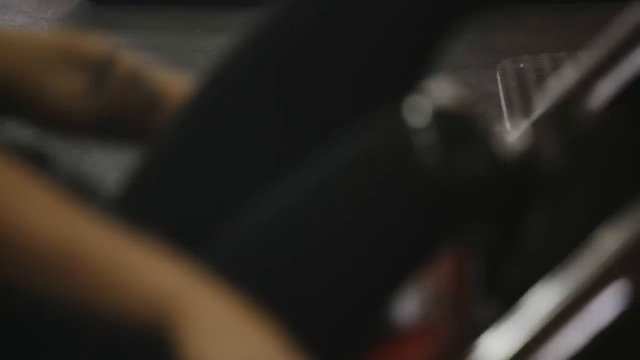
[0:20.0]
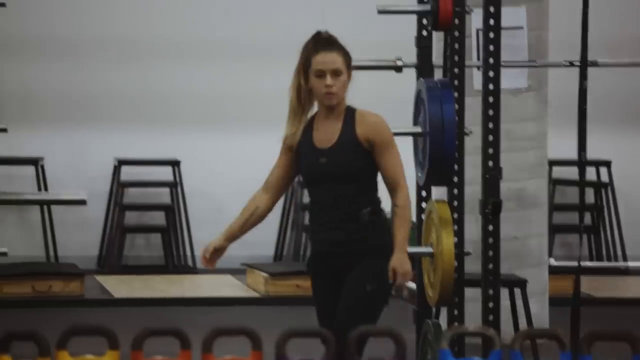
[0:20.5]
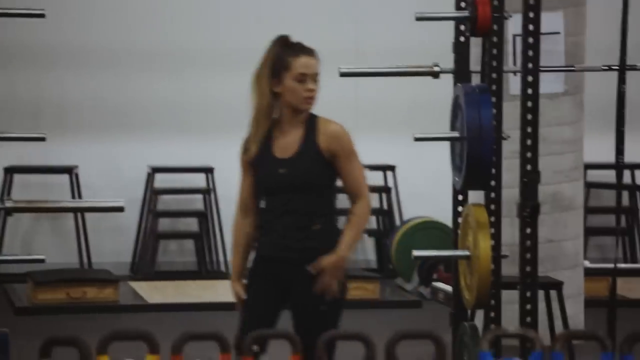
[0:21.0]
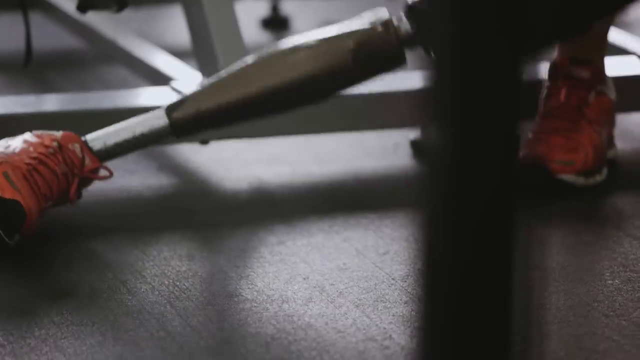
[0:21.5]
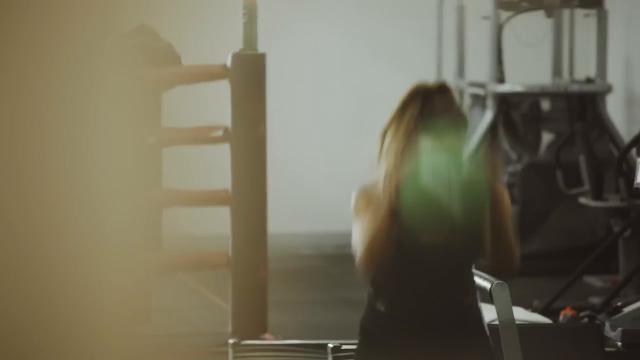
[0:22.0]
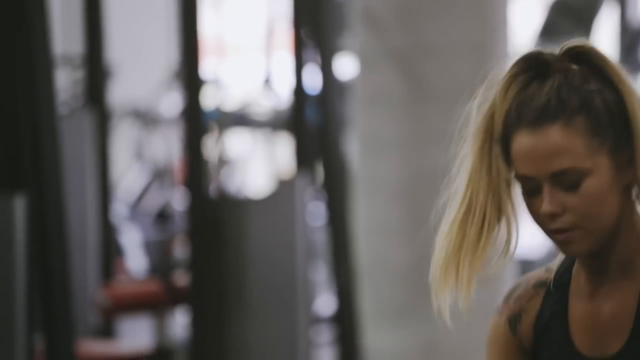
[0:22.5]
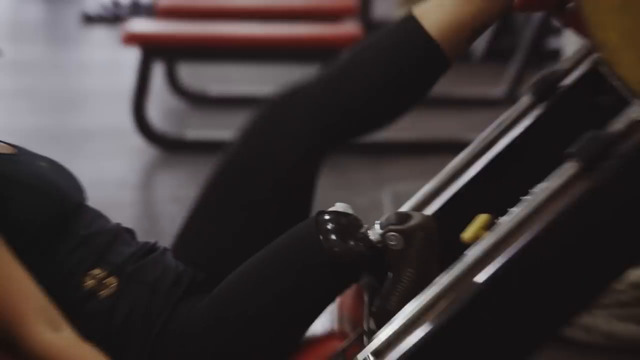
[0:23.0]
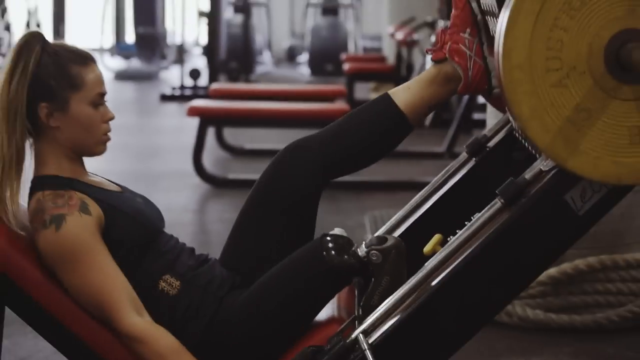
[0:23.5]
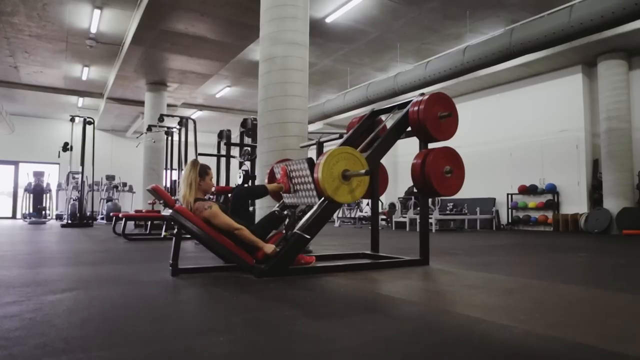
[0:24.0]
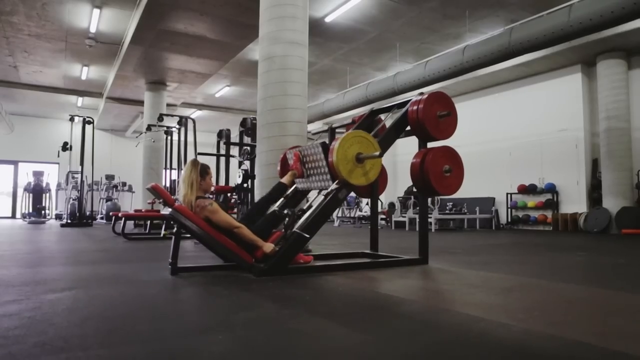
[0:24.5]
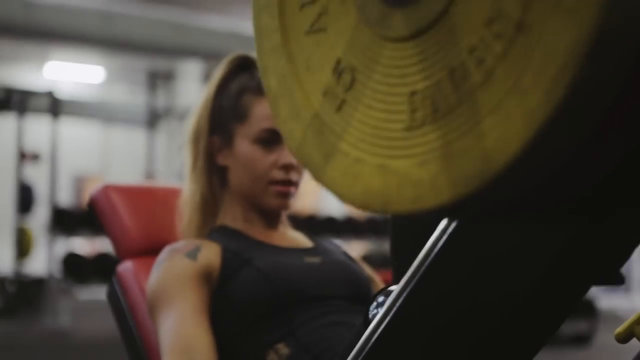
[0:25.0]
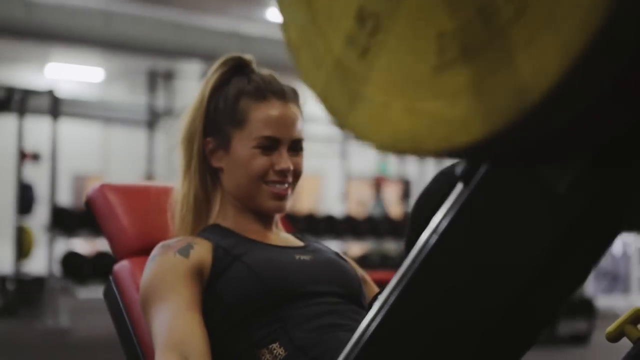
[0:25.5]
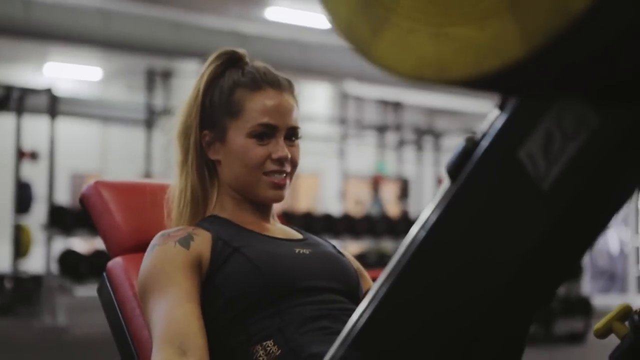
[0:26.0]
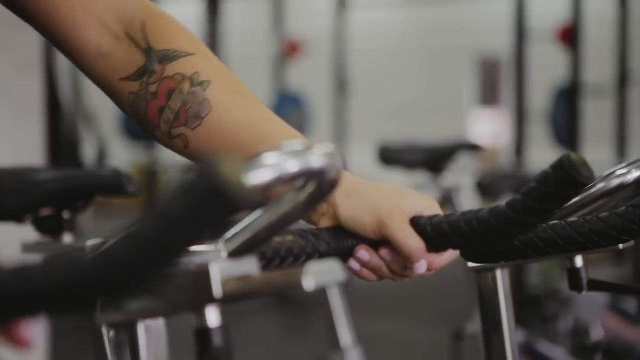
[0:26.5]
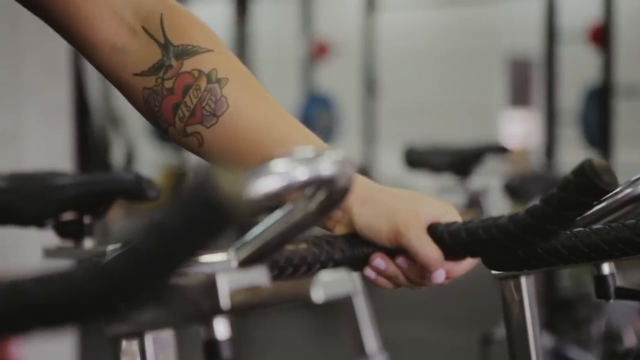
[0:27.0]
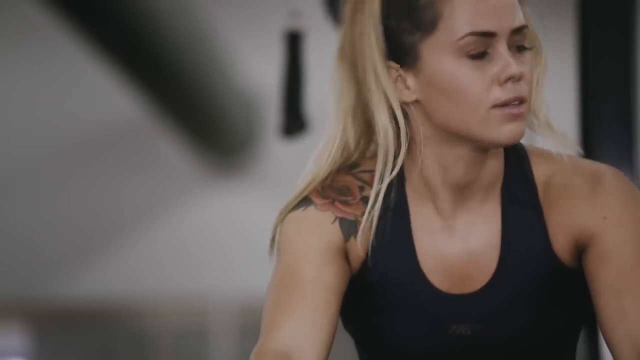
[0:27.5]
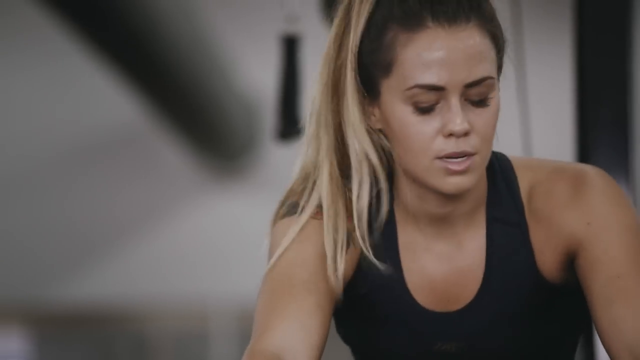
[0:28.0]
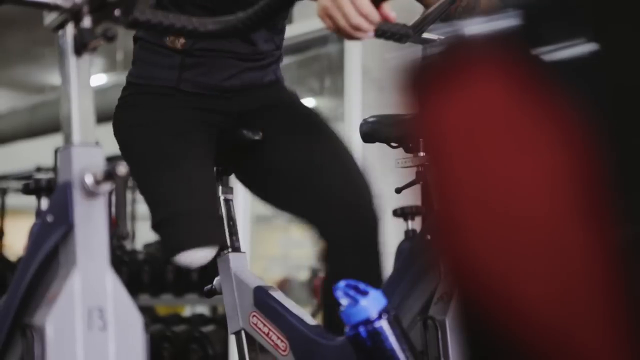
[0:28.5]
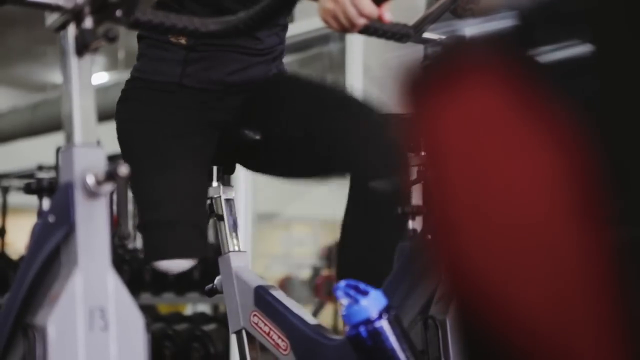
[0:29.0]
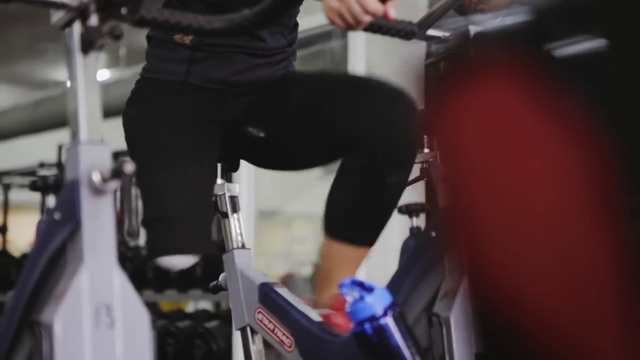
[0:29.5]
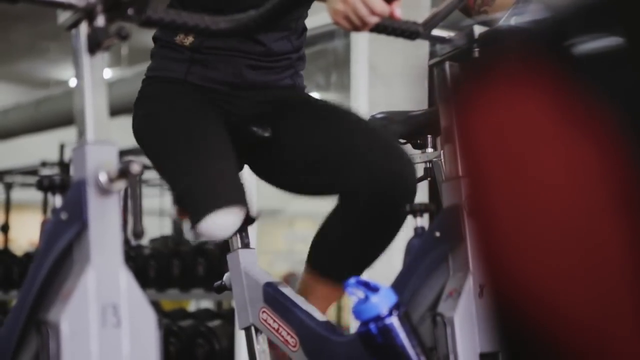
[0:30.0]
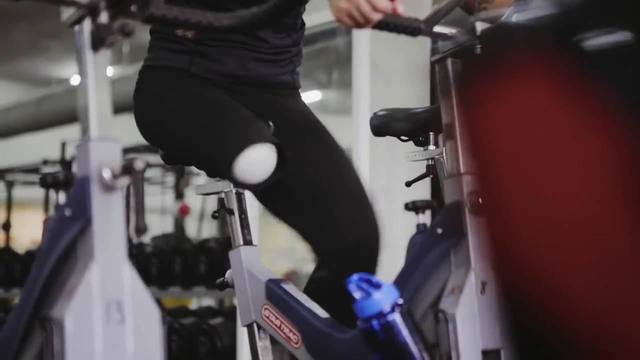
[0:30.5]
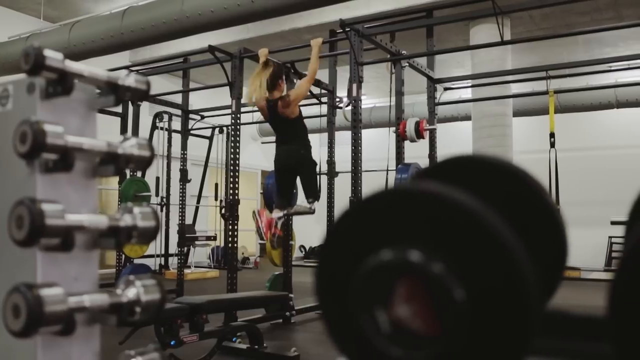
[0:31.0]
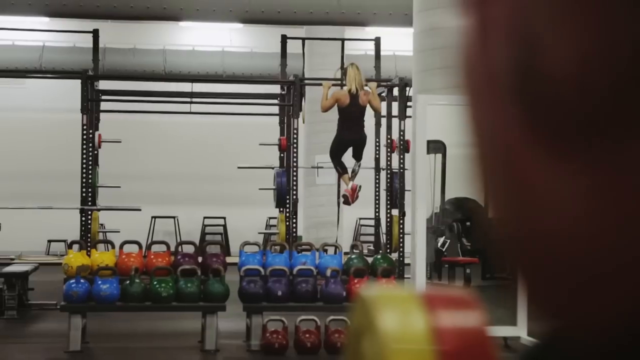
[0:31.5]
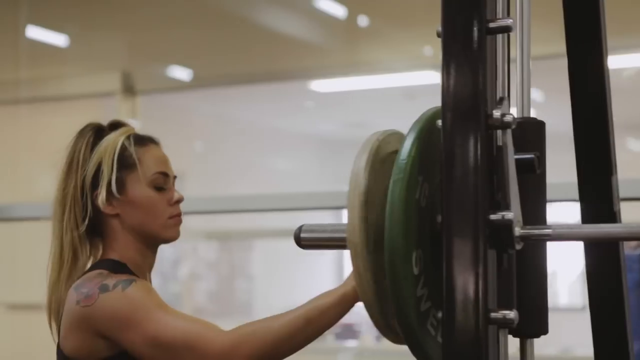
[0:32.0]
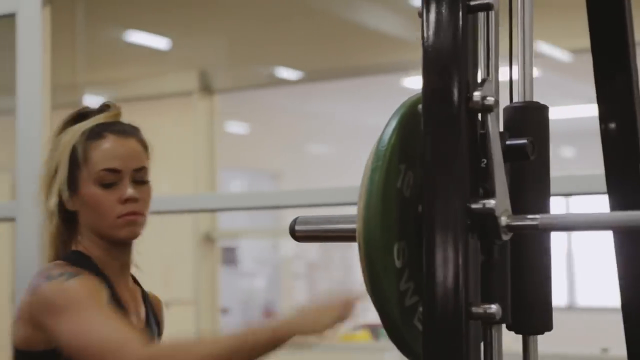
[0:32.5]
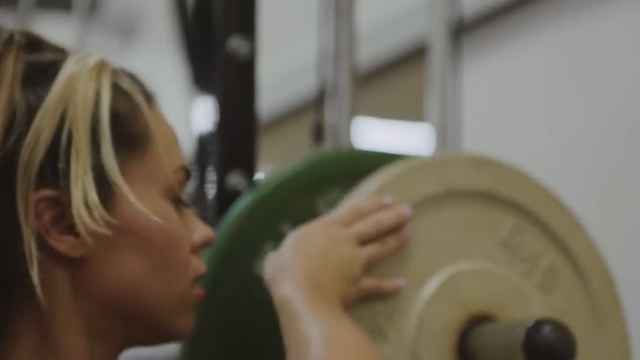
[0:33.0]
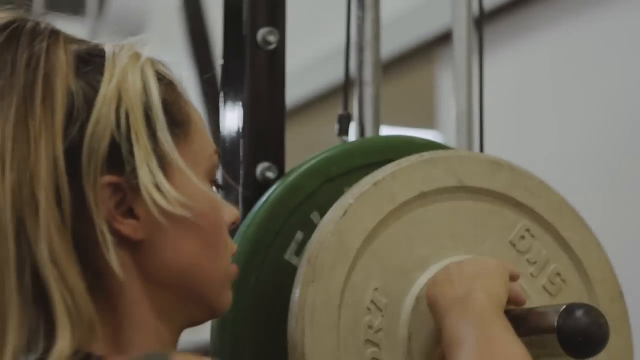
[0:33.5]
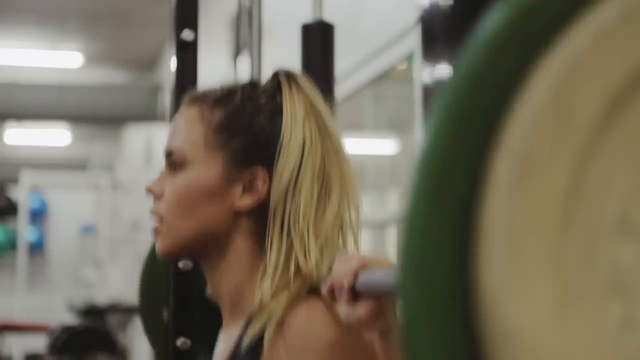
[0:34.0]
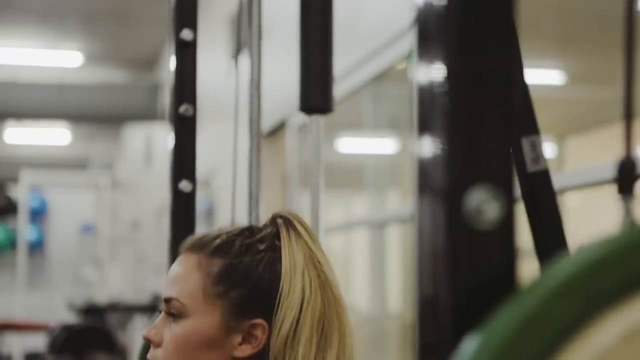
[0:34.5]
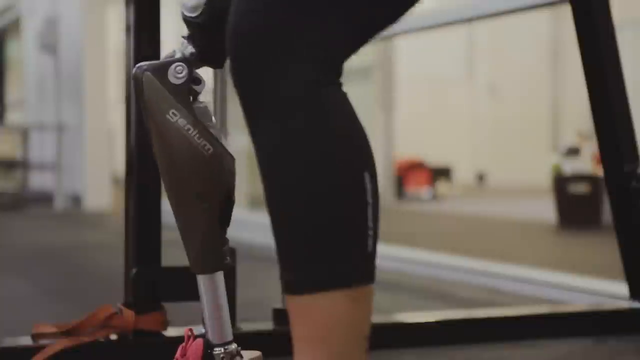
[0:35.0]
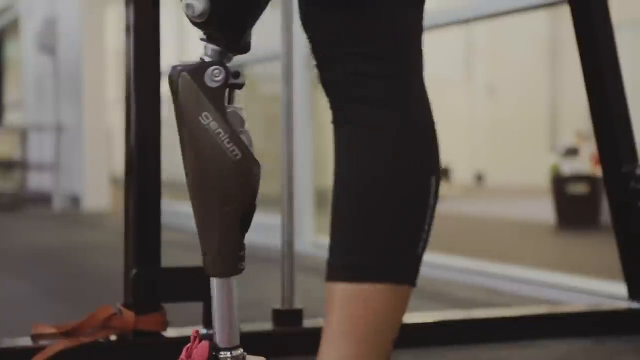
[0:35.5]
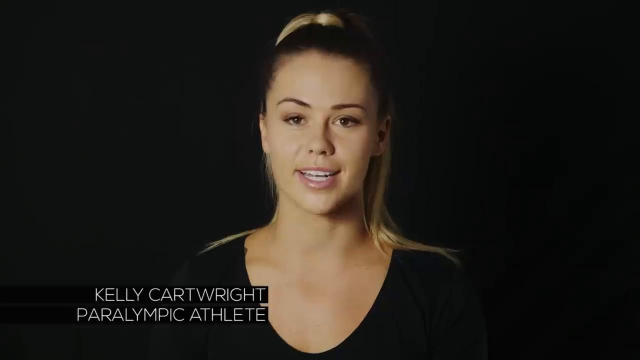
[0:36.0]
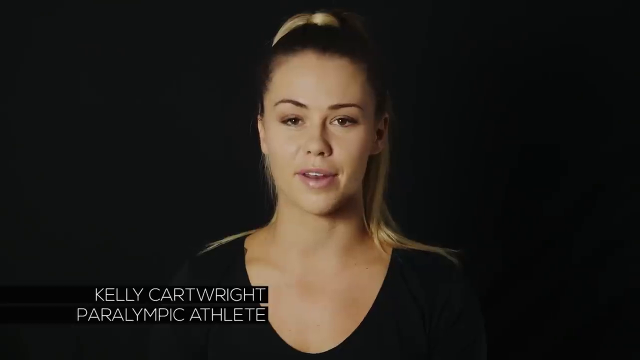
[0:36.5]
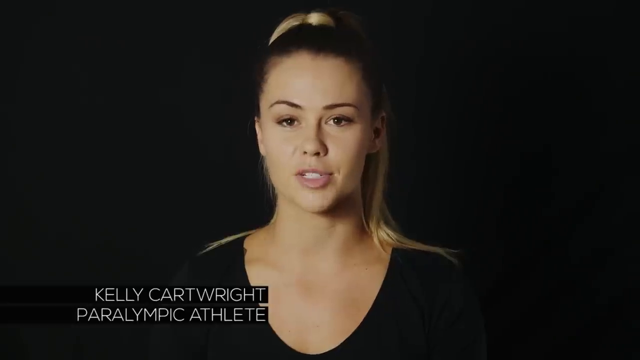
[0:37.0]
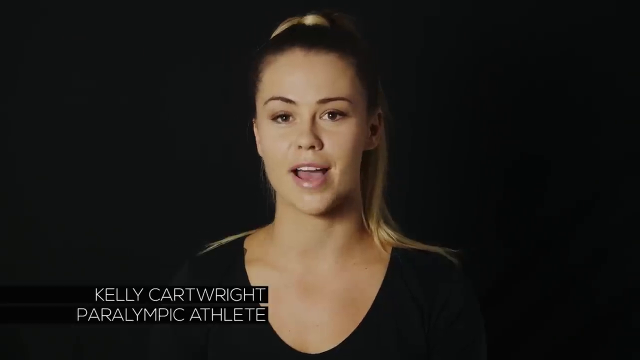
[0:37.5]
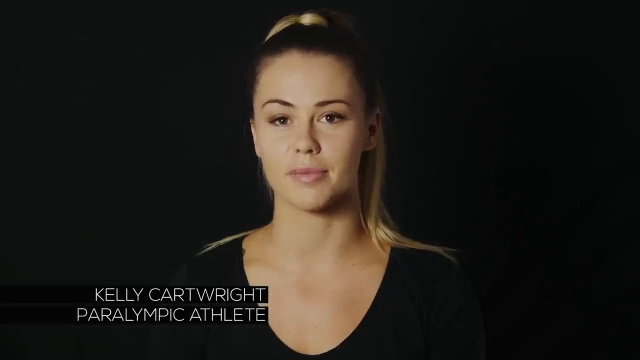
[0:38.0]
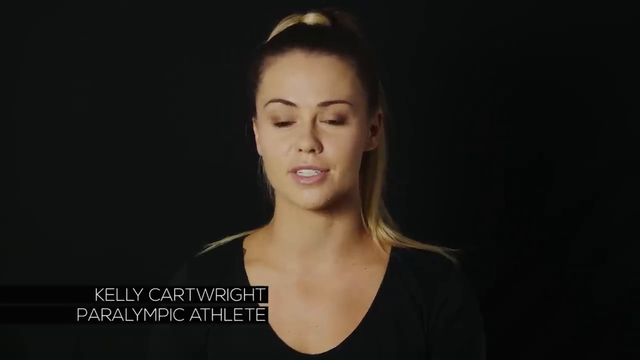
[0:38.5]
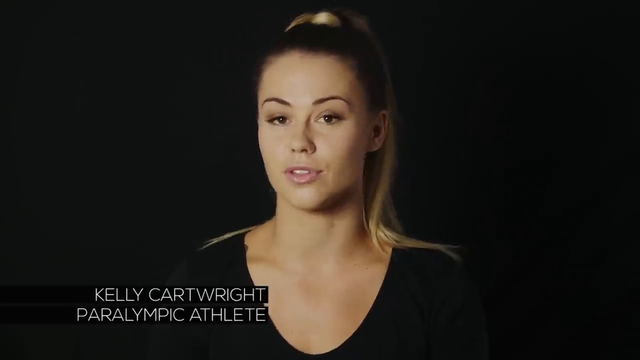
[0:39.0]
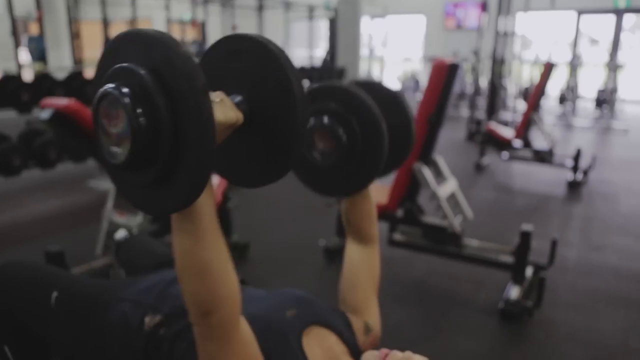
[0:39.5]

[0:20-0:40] Different views show a young woman working out in a gym on various pieces of exercise equipment. A few seconds in, it becomes clear that she is missing the lower part of her right leg; in some scenes she works out without her prosthetic leg and in others she has it on. She is on a machine pushing up weights with her left leg, on a stationary bike without her prosthetic, pulling herself up on bars, and lifting weights. A close-up of her face follows, and she is identified at the bottom of the screen as "Kelly Cartwright Paralympic Athlete." She has long blonde hair pulled up in a ponytail, wears a black t-shirt, and speaks to someone behind the camera.